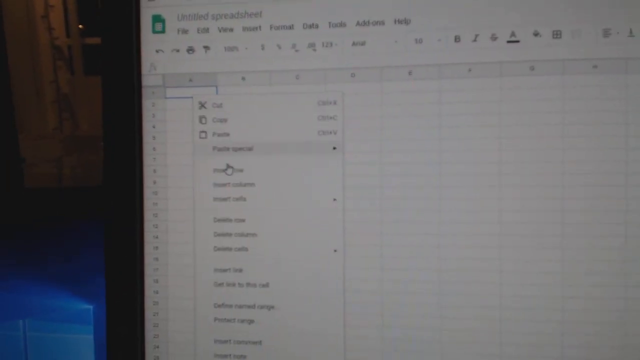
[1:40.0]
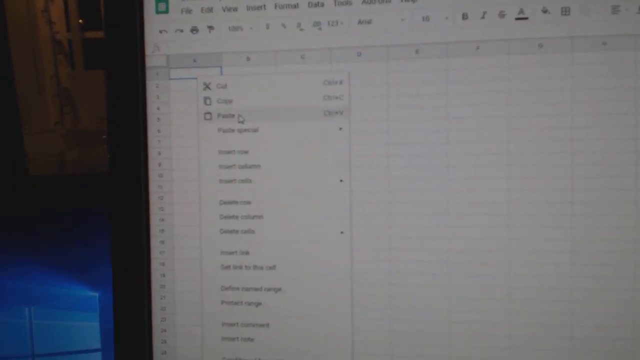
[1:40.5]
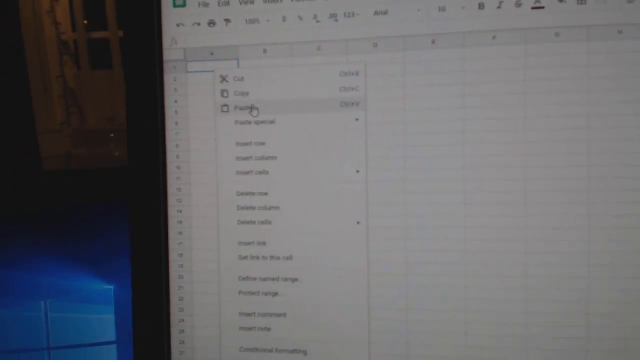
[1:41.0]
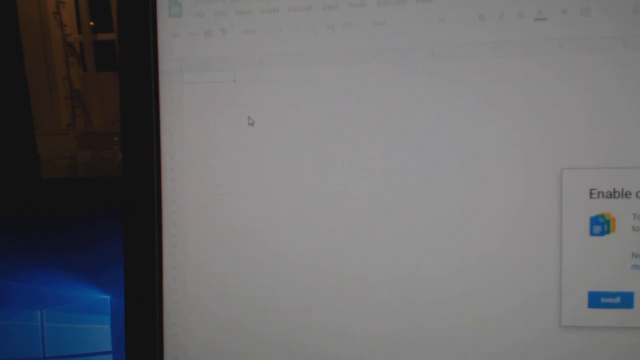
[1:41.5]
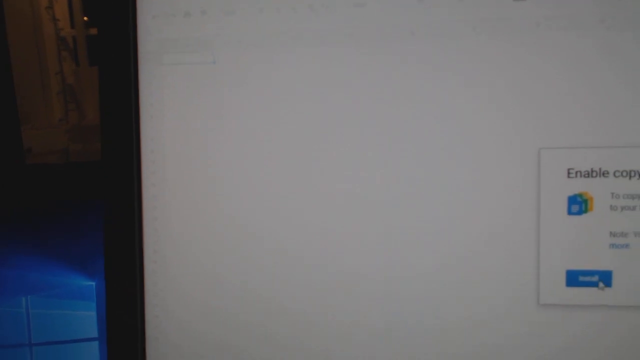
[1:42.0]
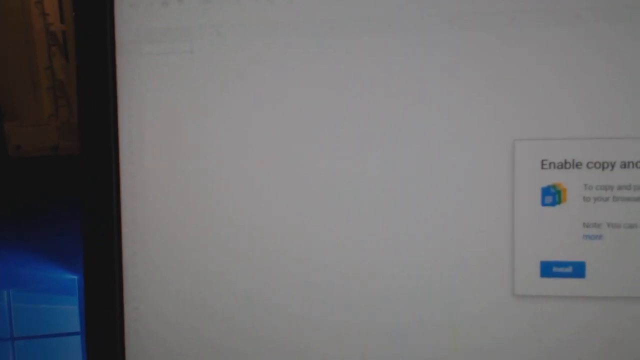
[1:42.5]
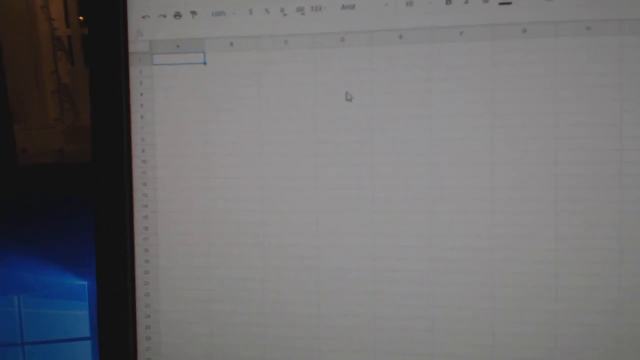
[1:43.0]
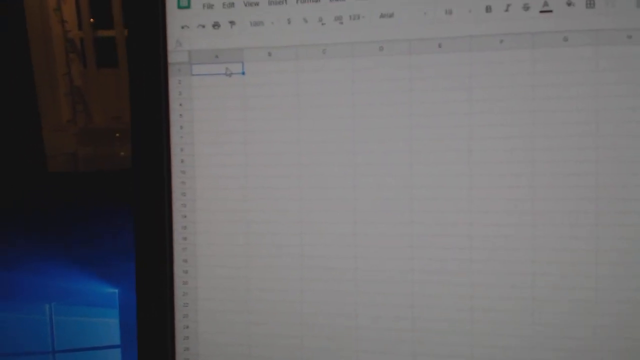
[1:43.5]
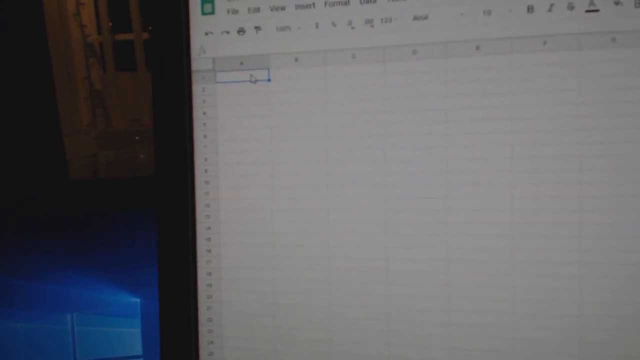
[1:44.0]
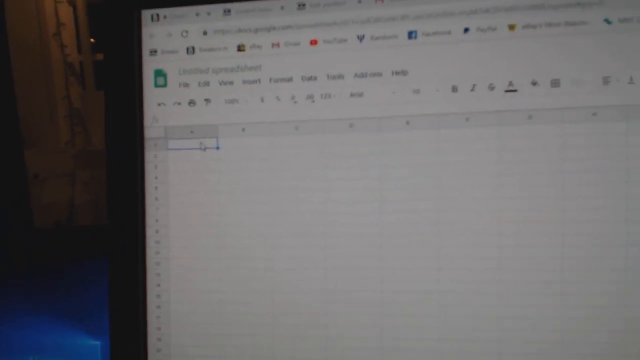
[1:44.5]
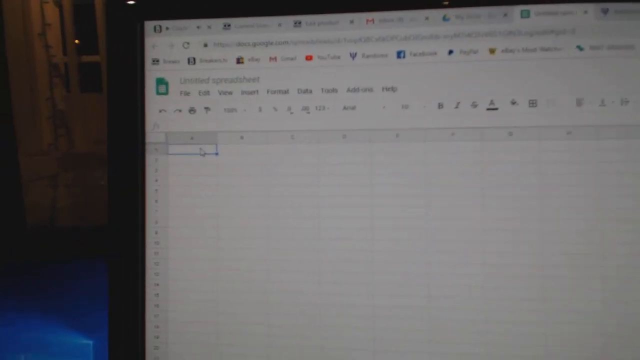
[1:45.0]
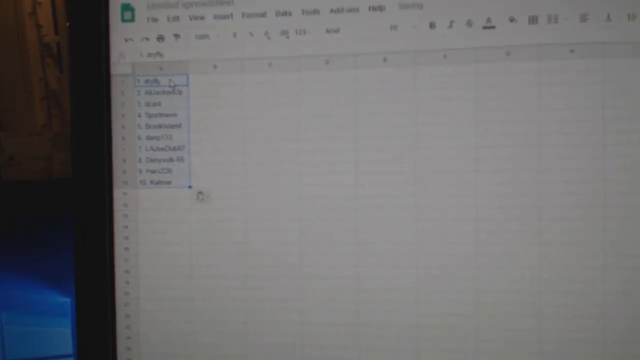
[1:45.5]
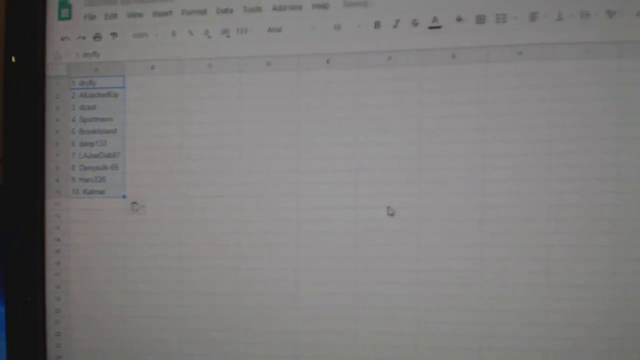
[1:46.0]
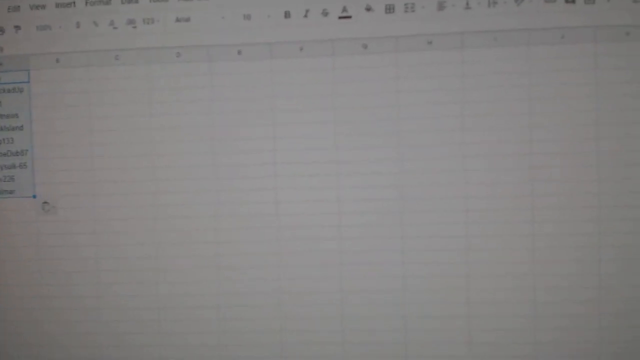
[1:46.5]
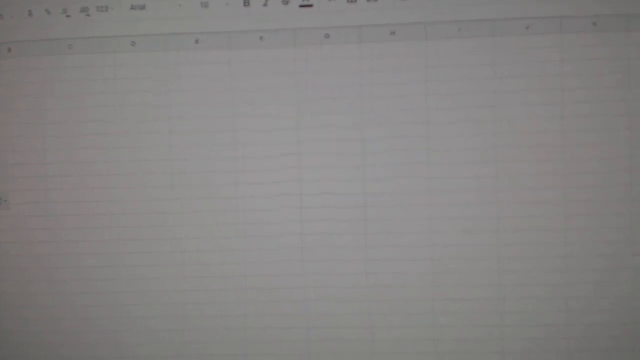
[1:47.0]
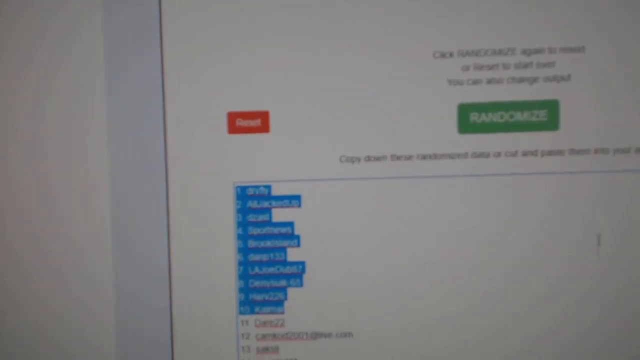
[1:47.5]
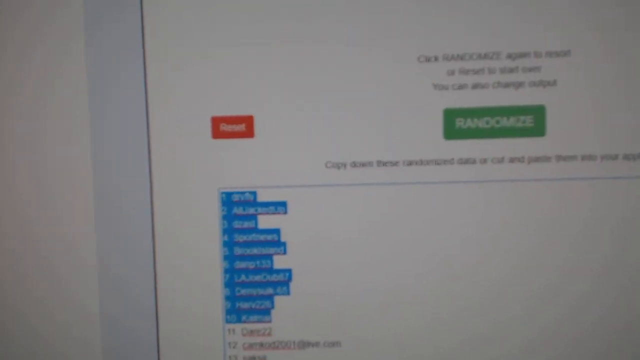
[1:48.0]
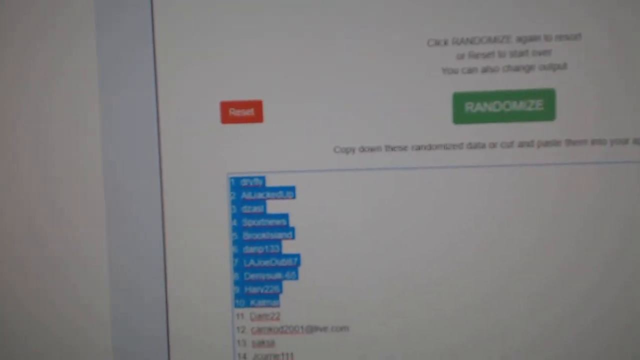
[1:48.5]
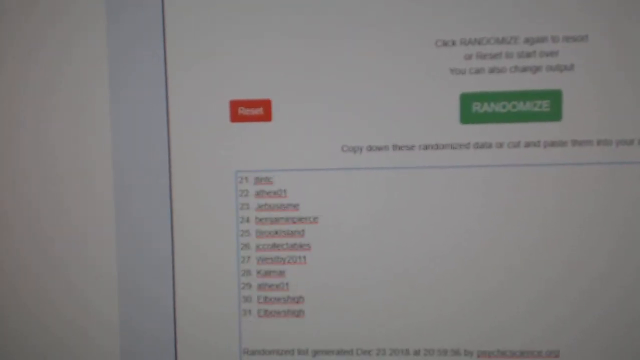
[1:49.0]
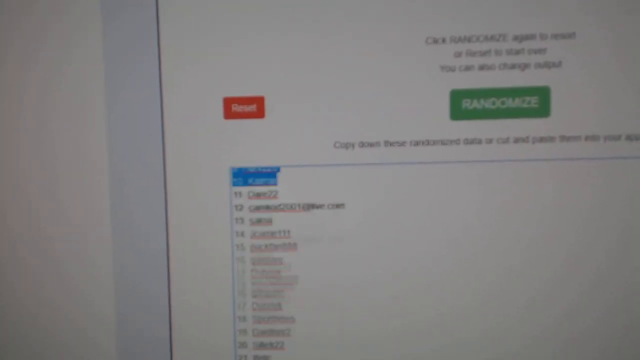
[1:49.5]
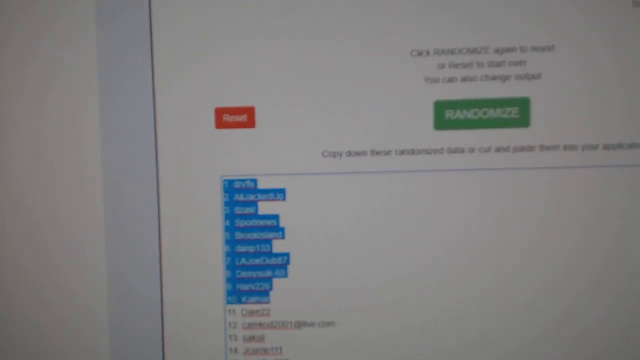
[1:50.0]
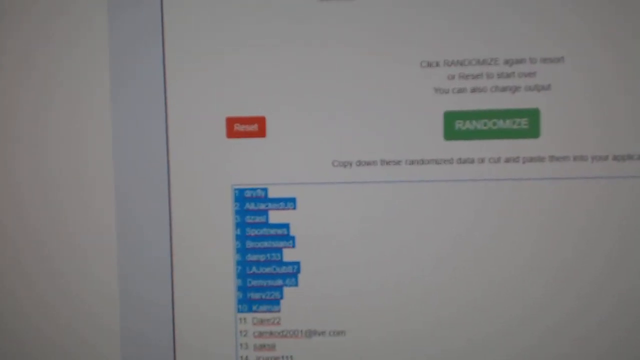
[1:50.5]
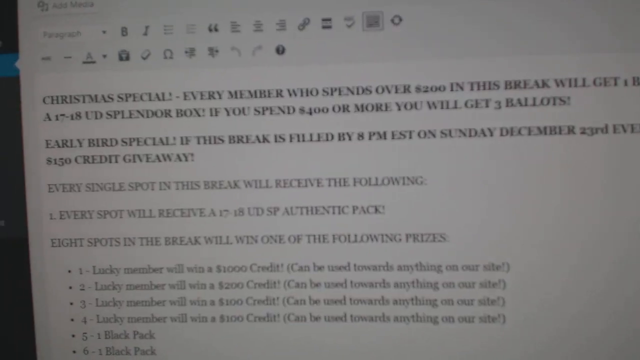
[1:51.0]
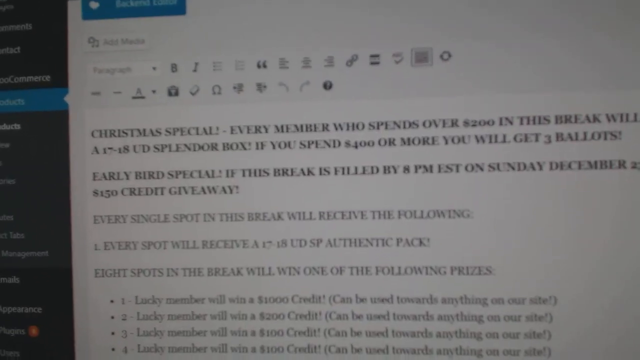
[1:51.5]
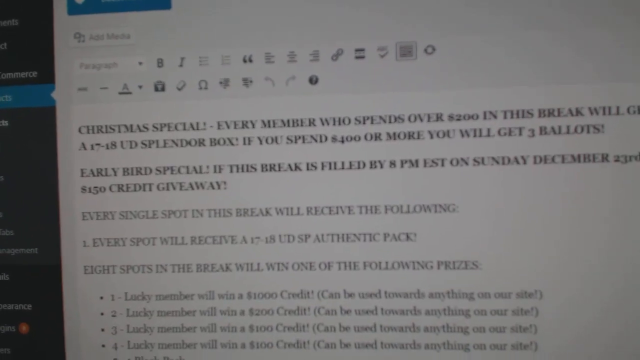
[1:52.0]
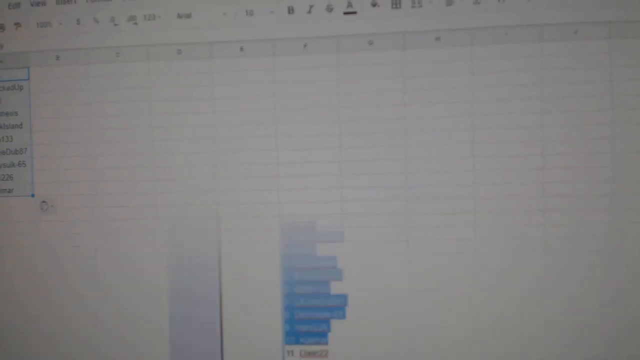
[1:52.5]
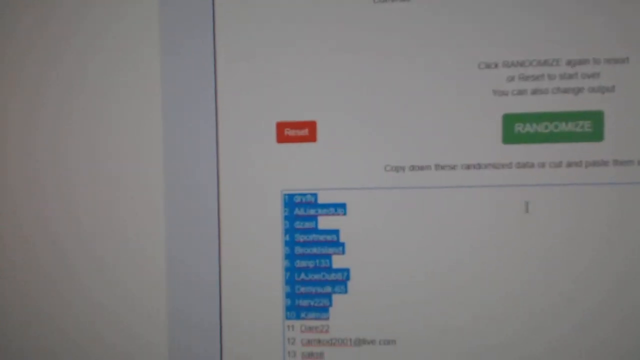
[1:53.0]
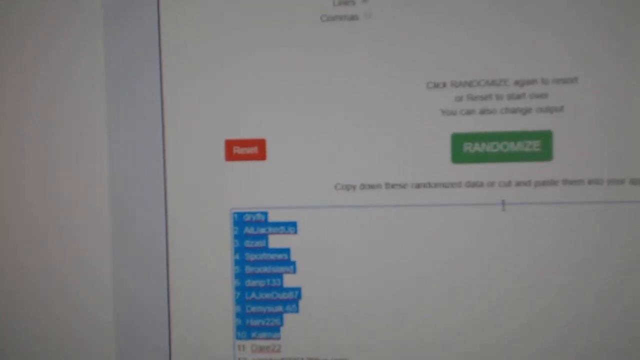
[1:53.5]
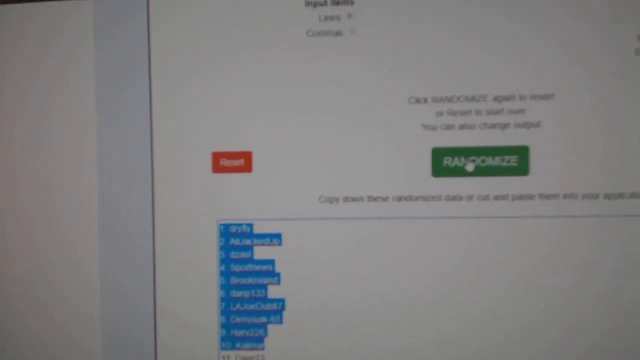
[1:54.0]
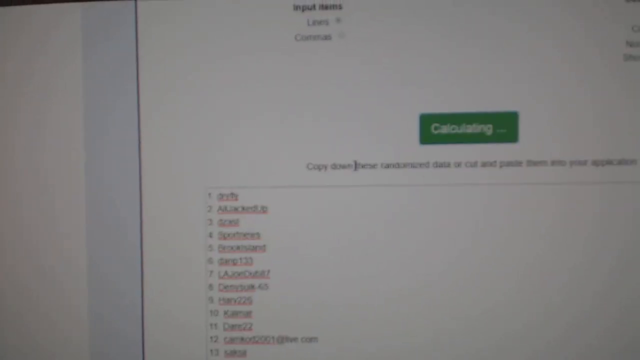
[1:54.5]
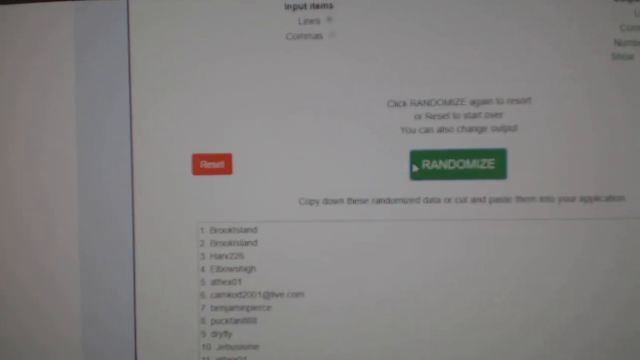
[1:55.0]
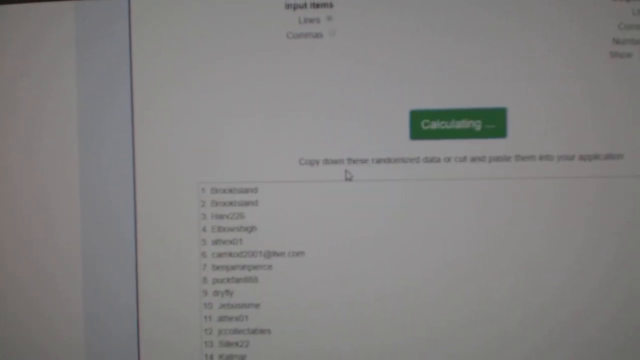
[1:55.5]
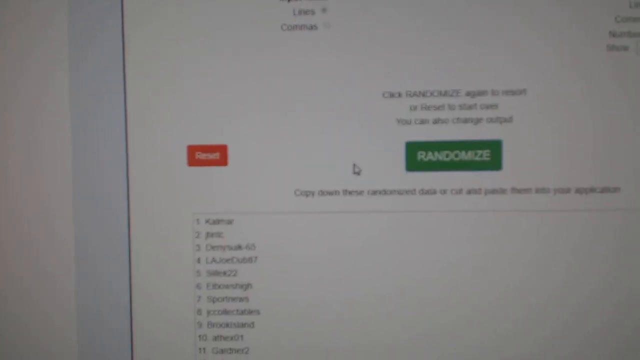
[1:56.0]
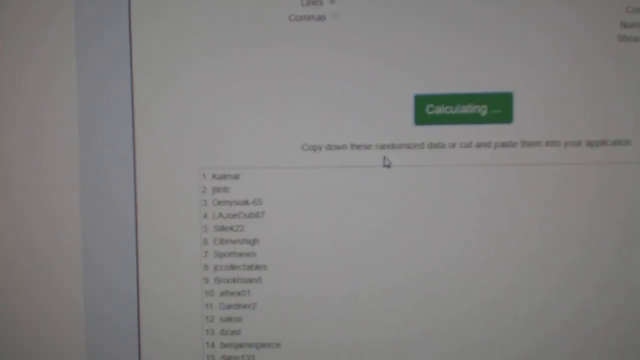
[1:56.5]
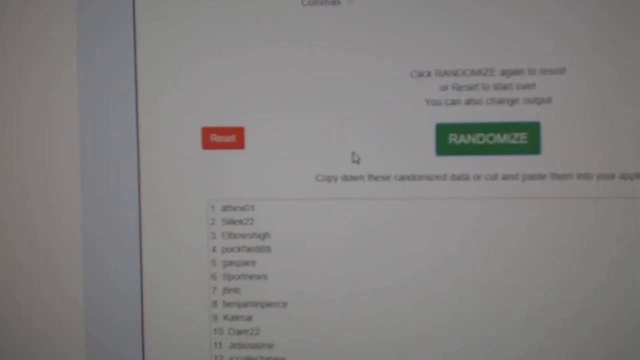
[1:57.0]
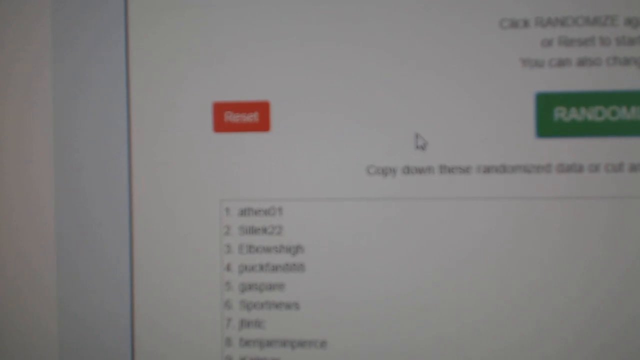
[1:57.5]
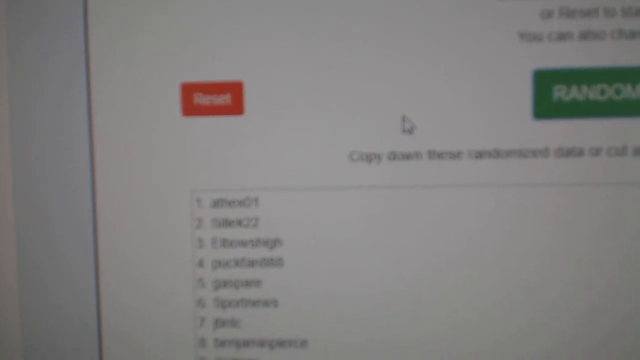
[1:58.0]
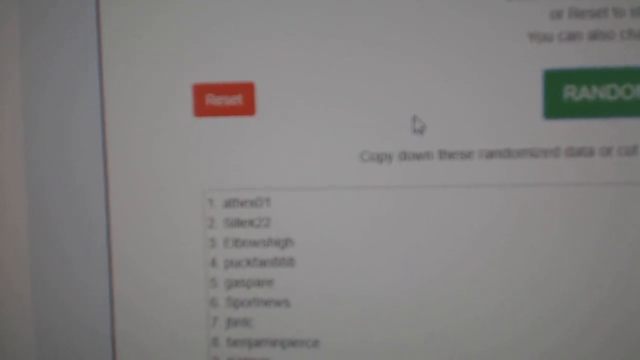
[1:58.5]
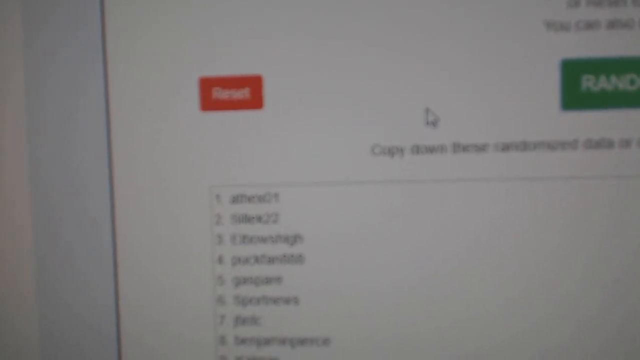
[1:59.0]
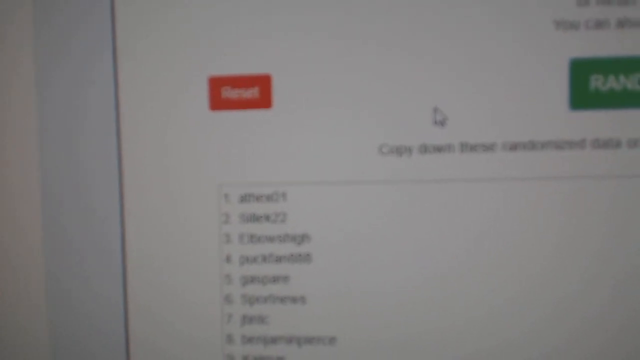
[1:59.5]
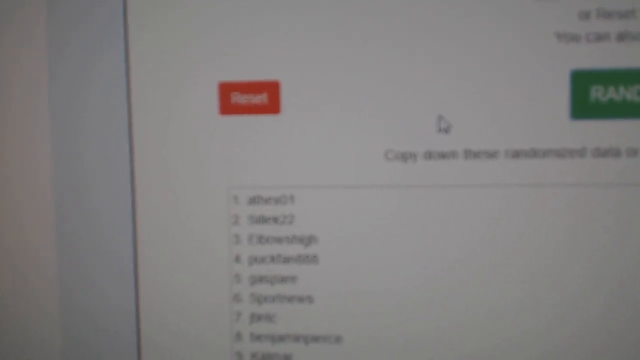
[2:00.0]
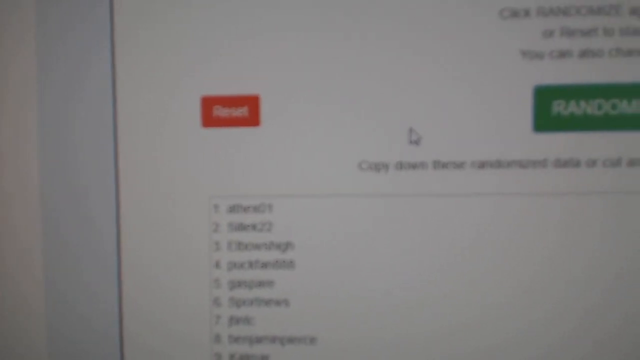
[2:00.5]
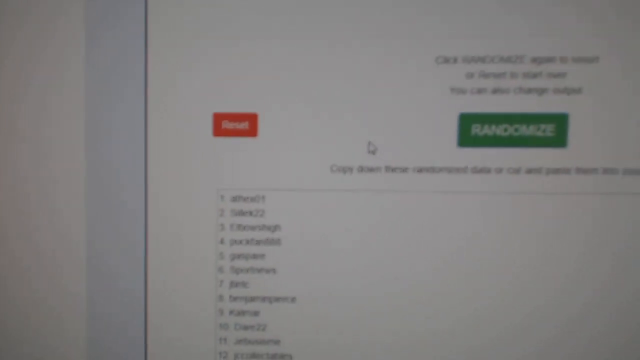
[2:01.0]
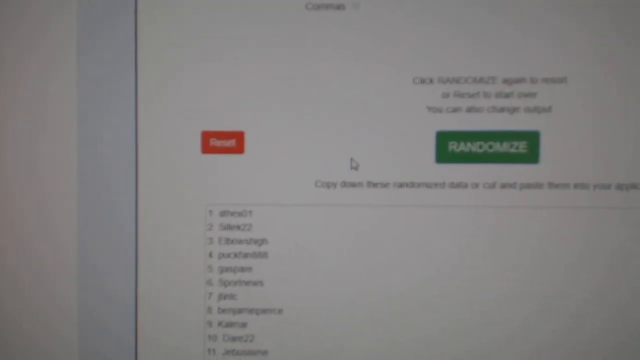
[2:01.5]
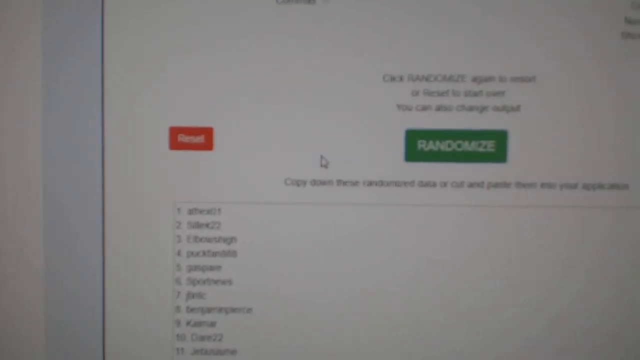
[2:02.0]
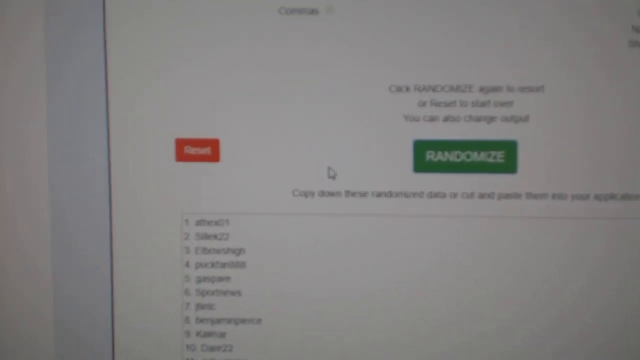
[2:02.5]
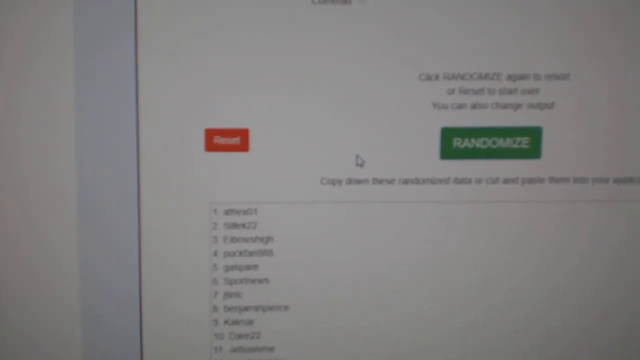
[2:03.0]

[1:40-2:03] Someone is filming a computer monitor; the edge of the monitor, or perhaps a laptop, is visible. On a Google Sheet, the right-click menu options appear and the person clicks paste. Something then says "enable" followed by something off screen that is cut off. A list of something seems to have been pasted in. The view moves to a page with "randomize" in a green rectangle, along with "reset" and another list. Next comes a page where it looks like someone is writing an email; it reads "Christmas special every member who spends over 200", with the rest cut off and hard to read amid a lot of text. Back on the randomize page, the person clicks randomize over and over, multiple times. Finally the screen just sits on this page with nothing else happening.